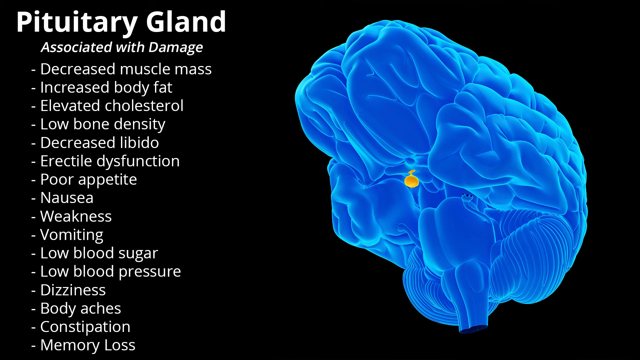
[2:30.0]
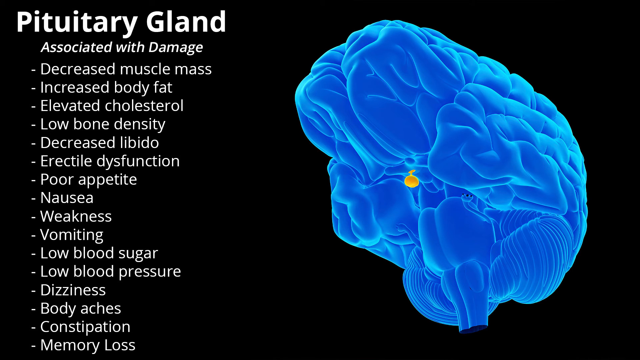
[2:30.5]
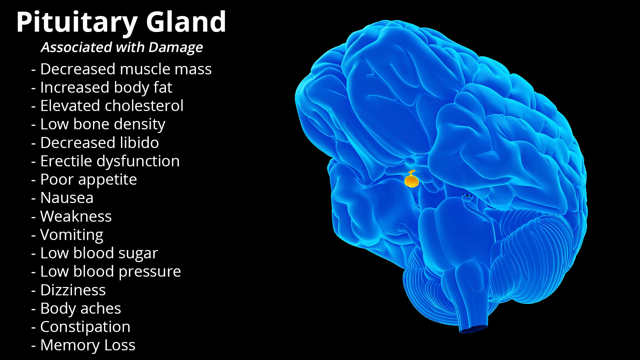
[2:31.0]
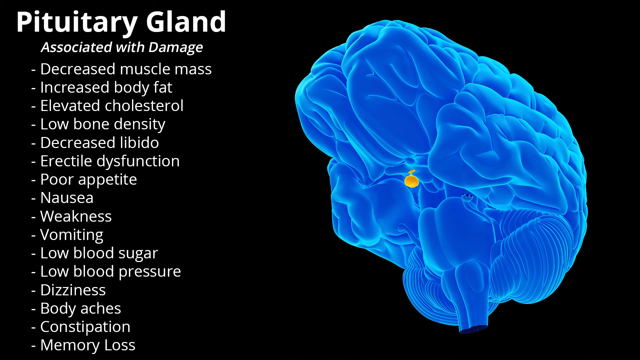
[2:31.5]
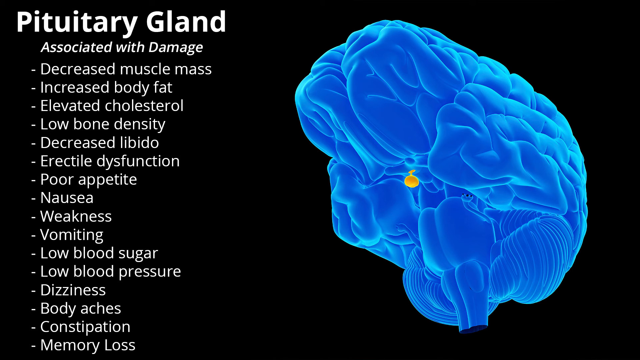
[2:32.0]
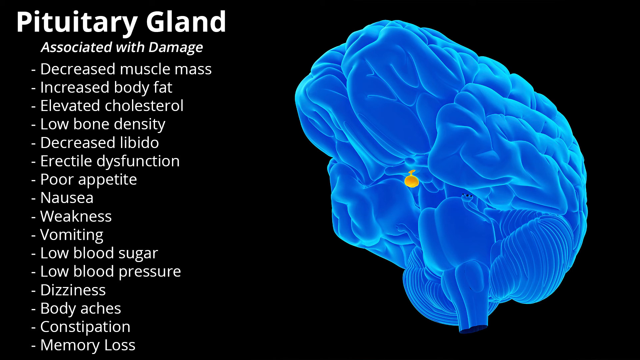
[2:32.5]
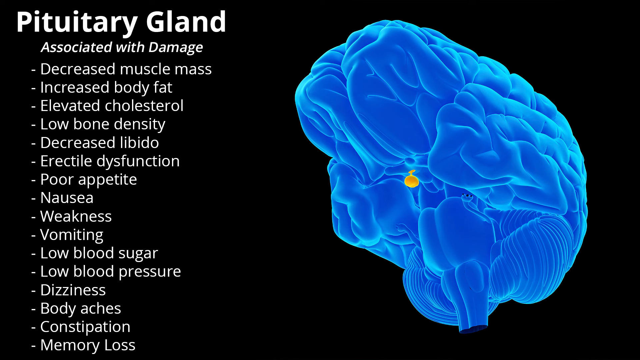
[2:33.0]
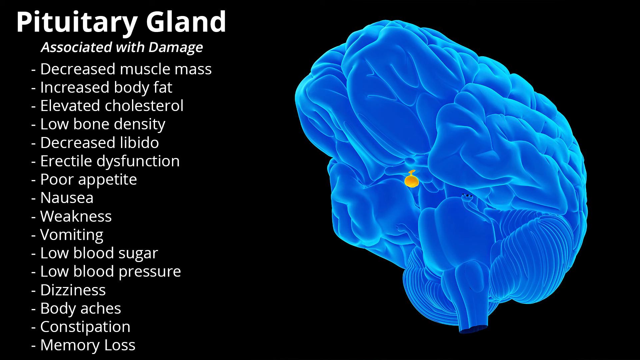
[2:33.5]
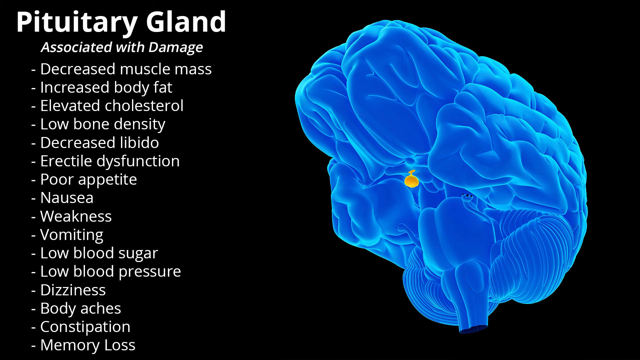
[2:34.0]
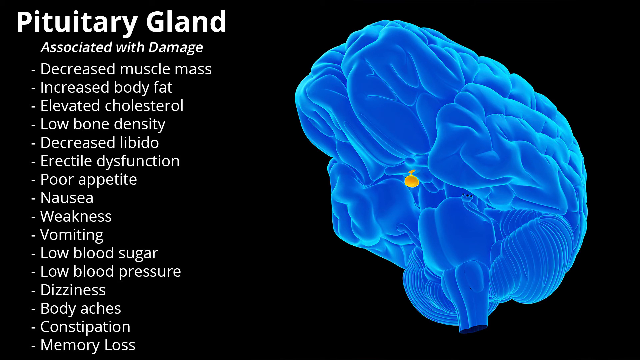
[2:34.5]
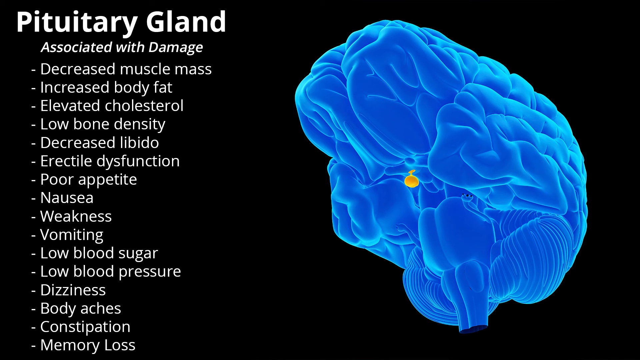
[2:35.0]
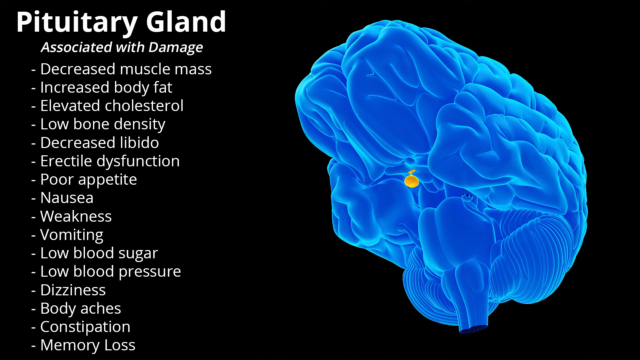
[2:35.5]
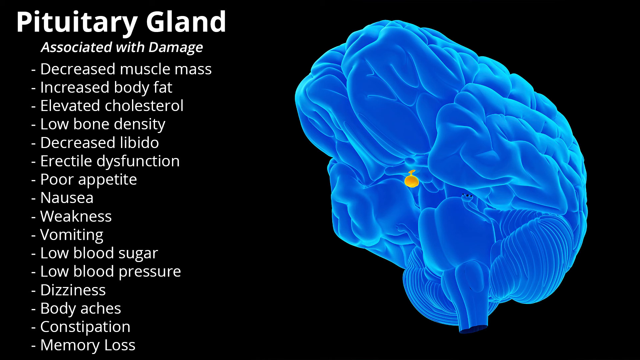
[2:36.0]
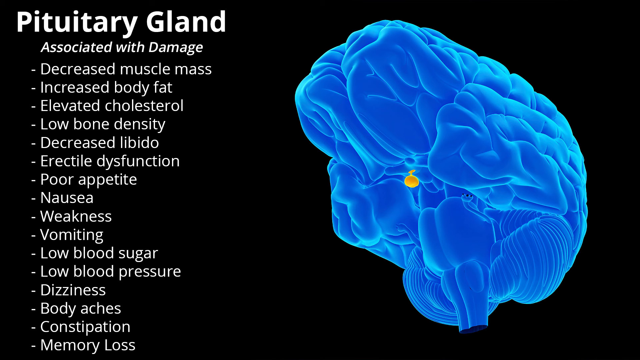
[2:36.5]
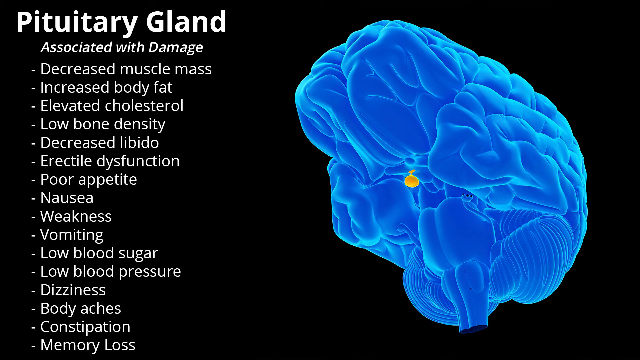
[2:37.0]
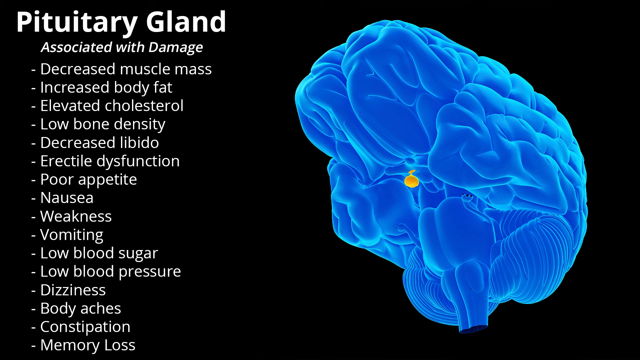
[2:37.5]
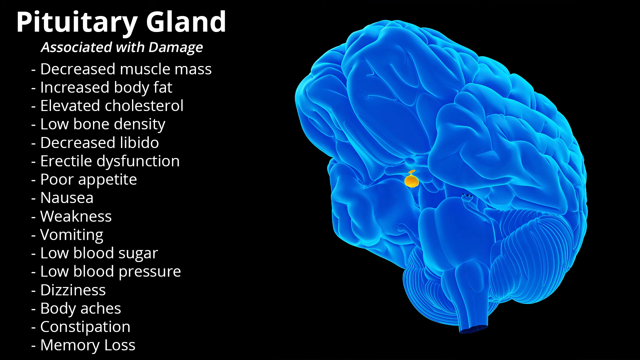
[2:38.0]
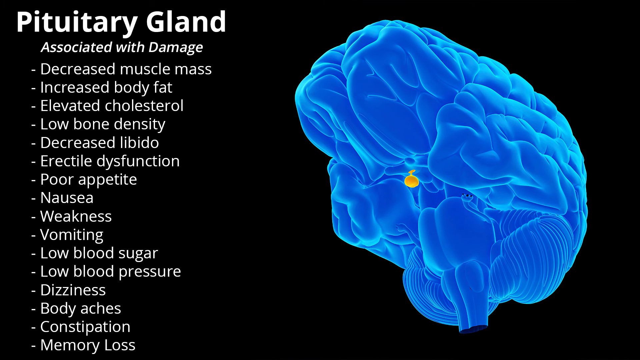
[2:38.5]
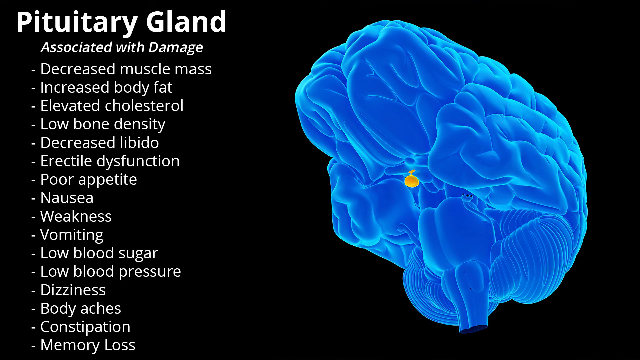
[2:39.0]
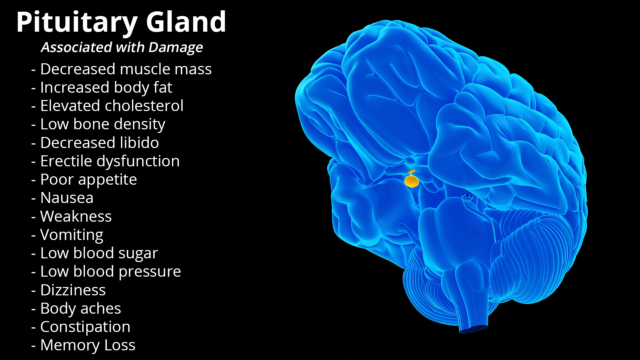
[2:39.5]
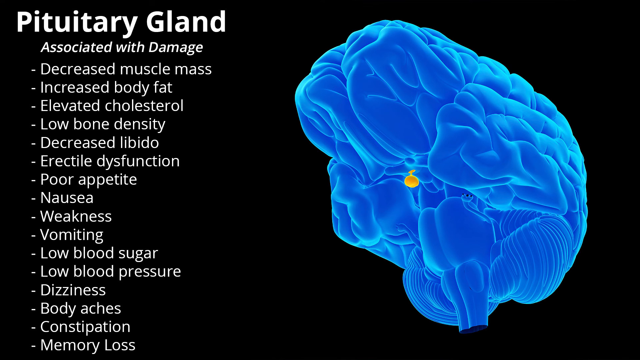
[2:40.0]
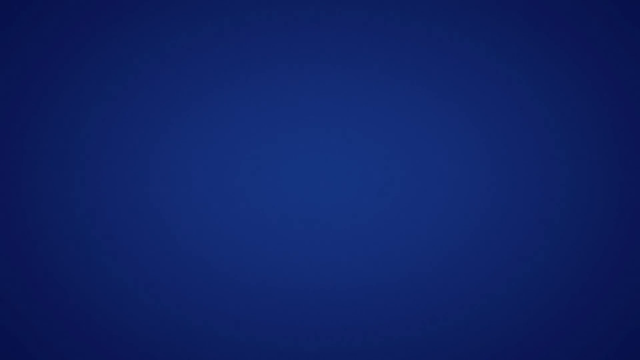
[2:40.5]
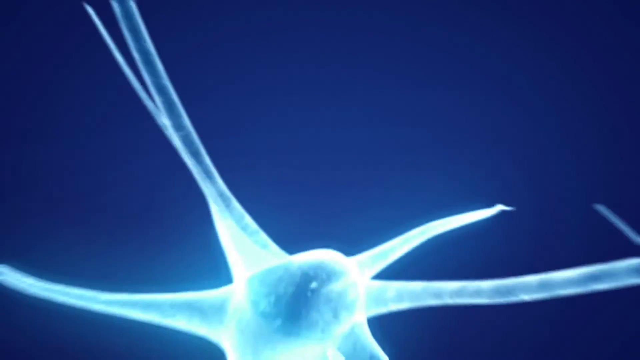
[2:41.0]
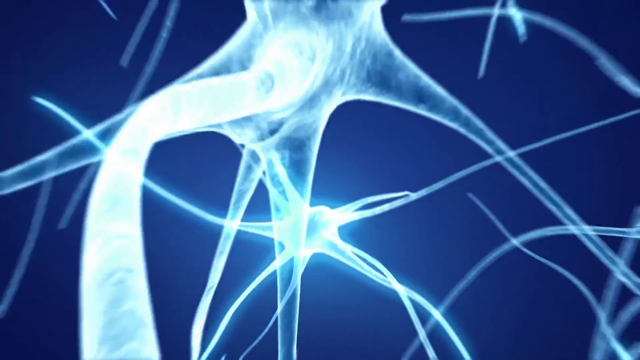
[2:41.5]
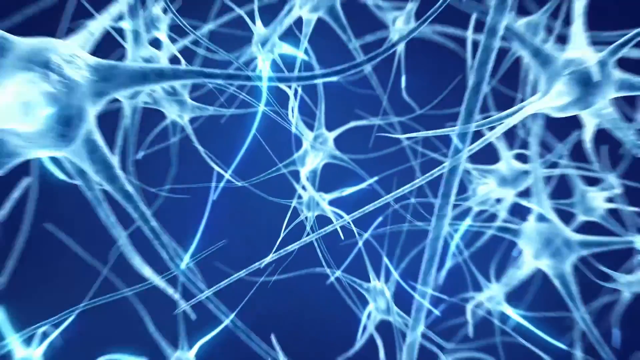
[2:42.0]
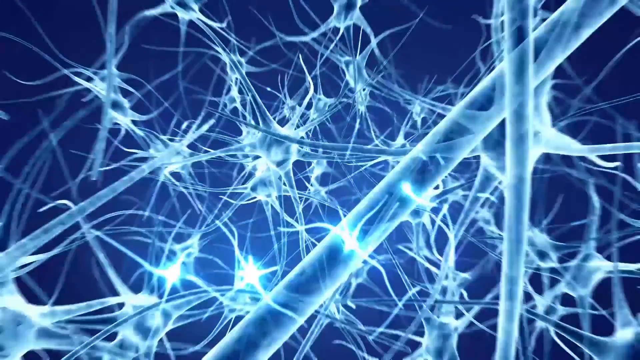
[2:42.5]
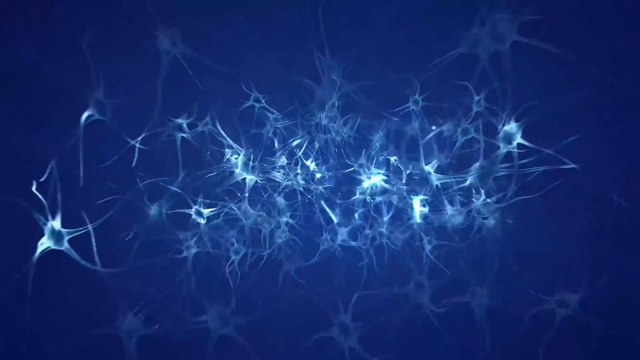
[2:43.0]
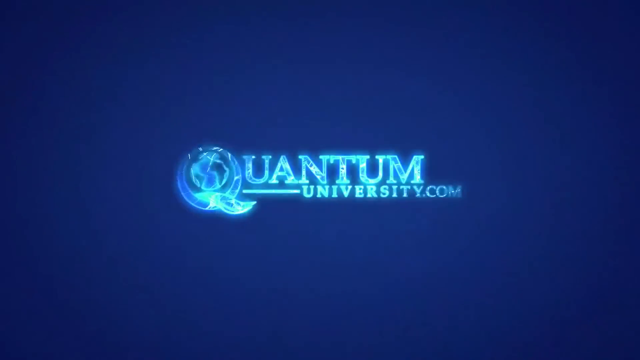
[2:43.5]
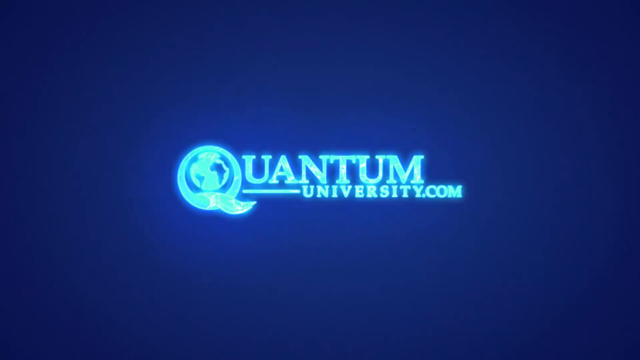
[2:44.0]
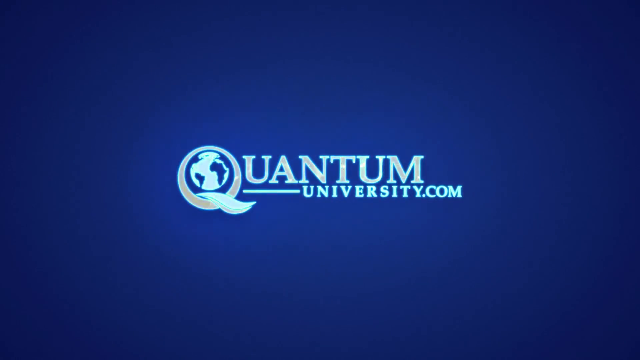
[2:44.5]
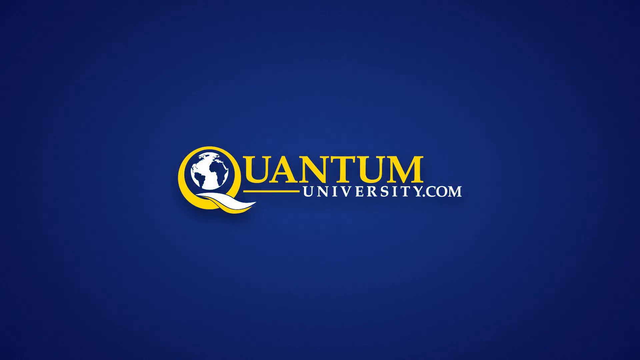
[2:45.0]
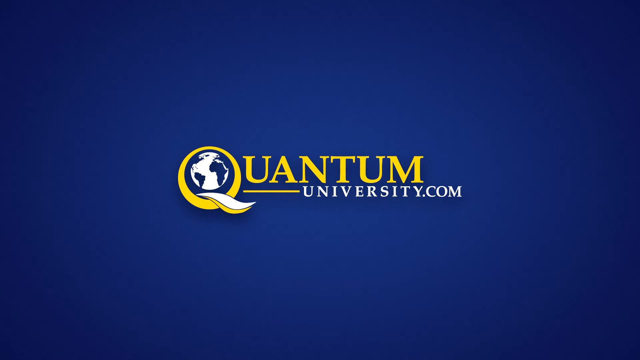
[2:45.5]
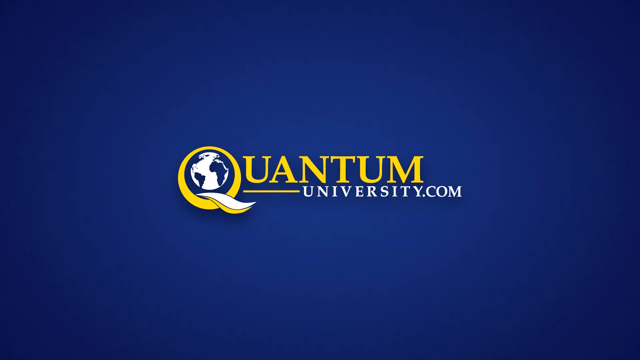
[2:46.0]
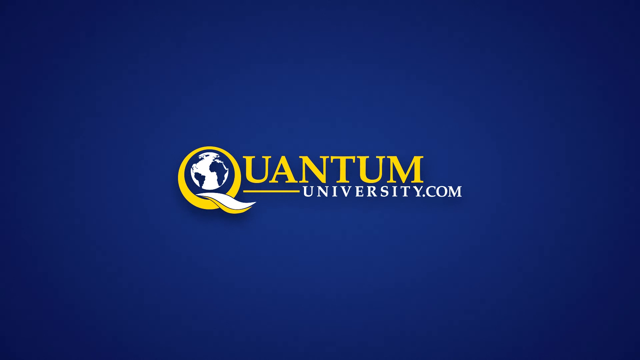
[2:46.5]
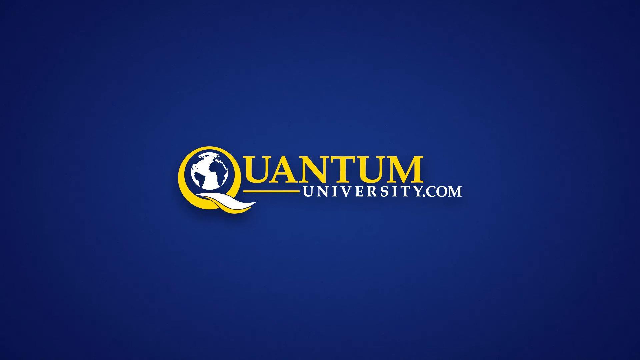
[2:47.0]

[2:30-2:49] The slide shows "pituitary gland" in bold in the top left corner, "associated damage" in italics underneath, and bullet points listing decreased muscle mass, increased body fat, elevated cholesterol, low bio-density, decreased libido, erectile dysfunction, poor appetite, nausea, weakness, vomiting, low blood sugar, low blood pressure, dizziness, body aches, constipation and memory loss. On the right is the blue brain with many folds and sulci, the brainstem briefly visible, viewed from below and the lower right, with the brain angled towards the upper right. A small yellow dot in the middle of the brain appears to be the pituitary gland. The slide finishes by showing neurons in the brain, and as the camera pulls out and the animations change, the makers of the video are shown as quantumuniversity.com.